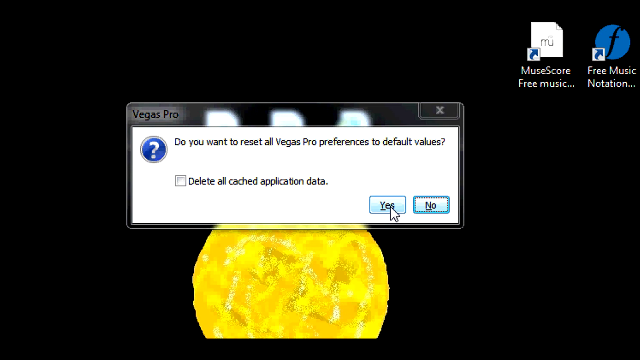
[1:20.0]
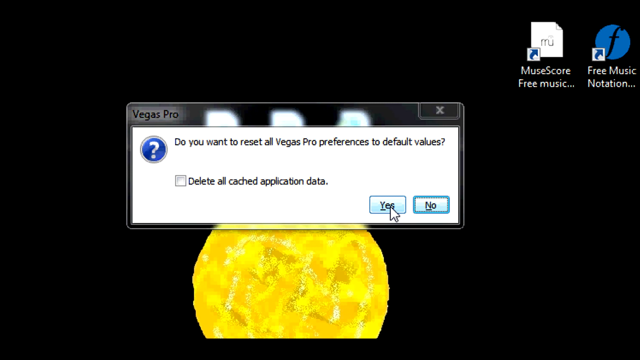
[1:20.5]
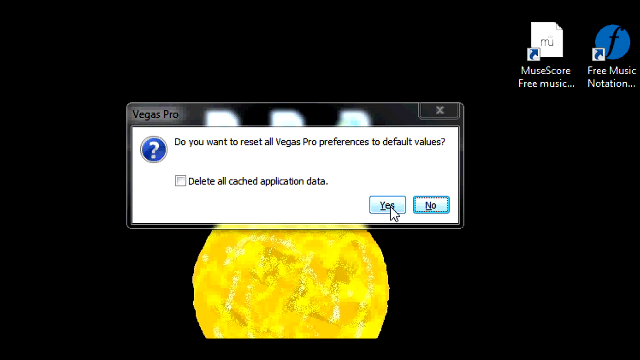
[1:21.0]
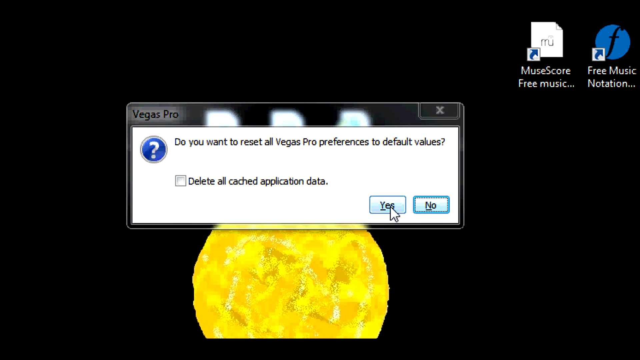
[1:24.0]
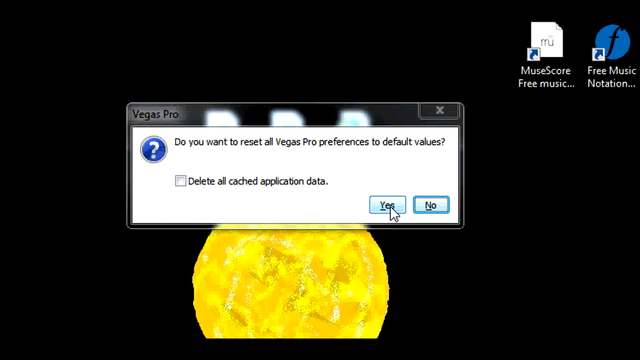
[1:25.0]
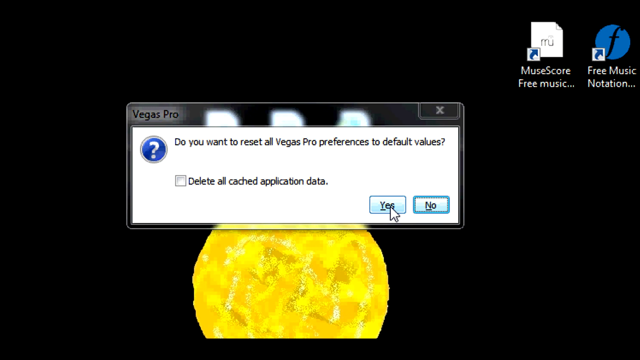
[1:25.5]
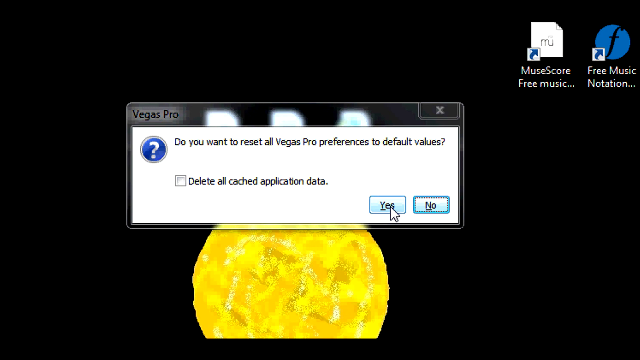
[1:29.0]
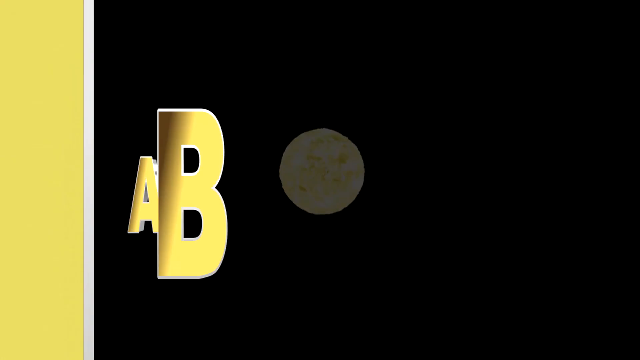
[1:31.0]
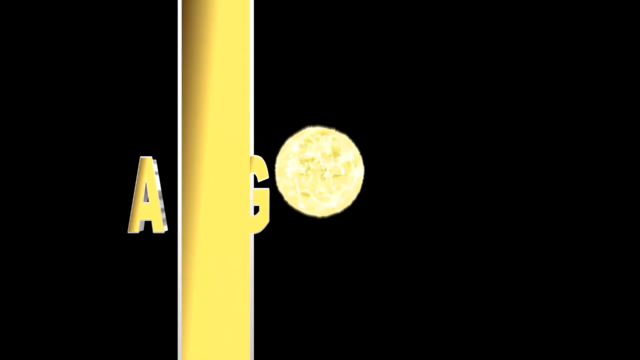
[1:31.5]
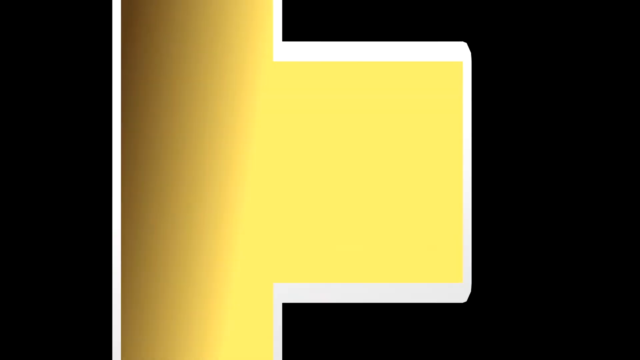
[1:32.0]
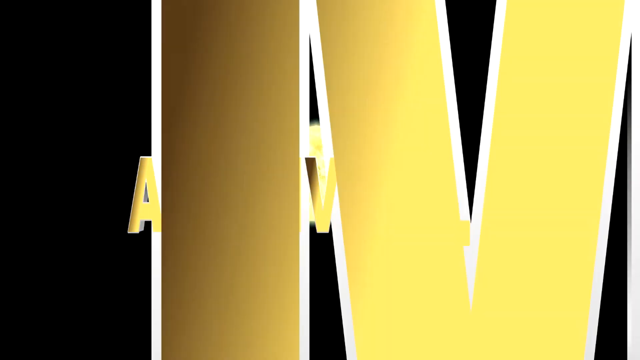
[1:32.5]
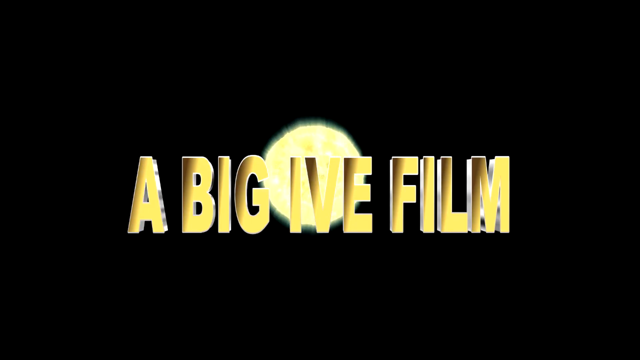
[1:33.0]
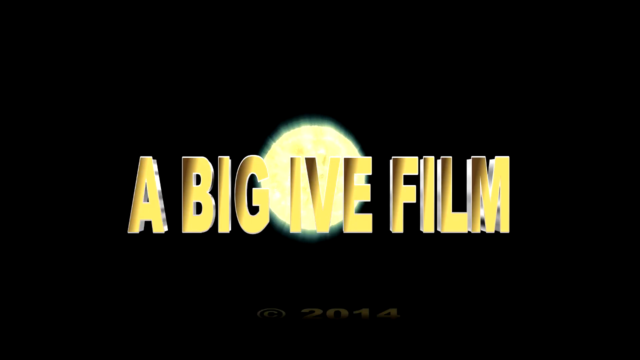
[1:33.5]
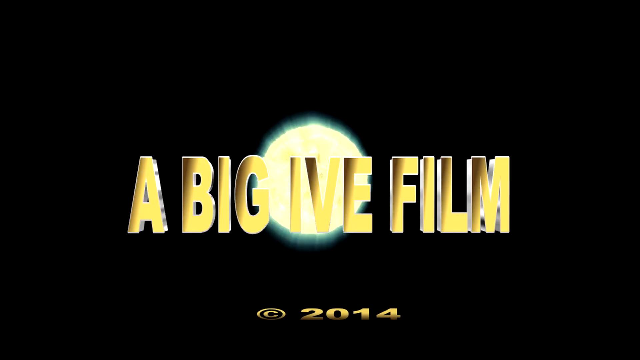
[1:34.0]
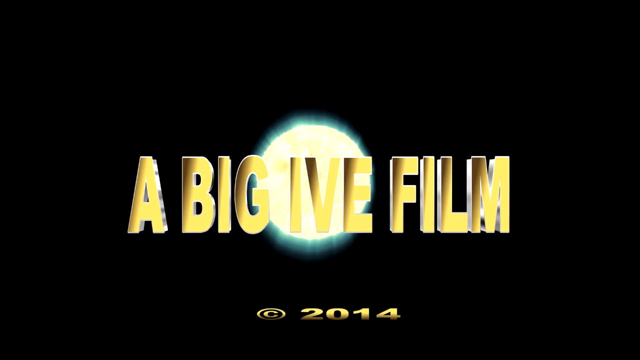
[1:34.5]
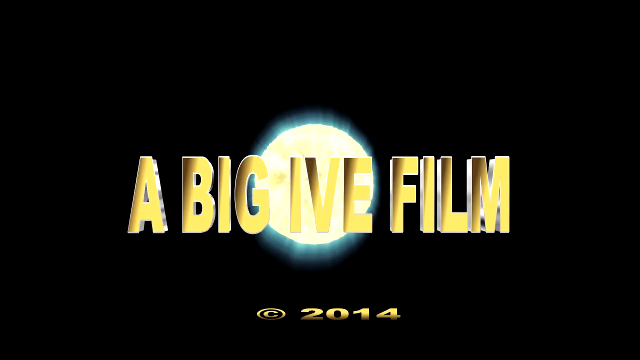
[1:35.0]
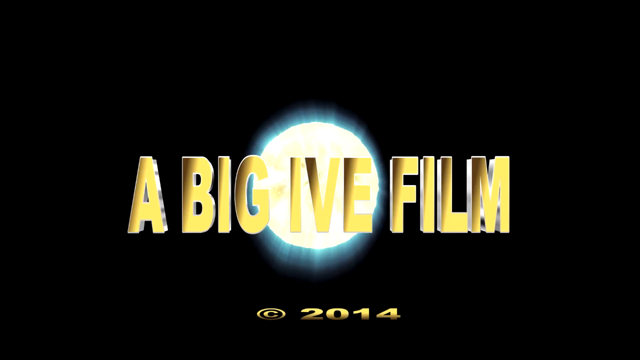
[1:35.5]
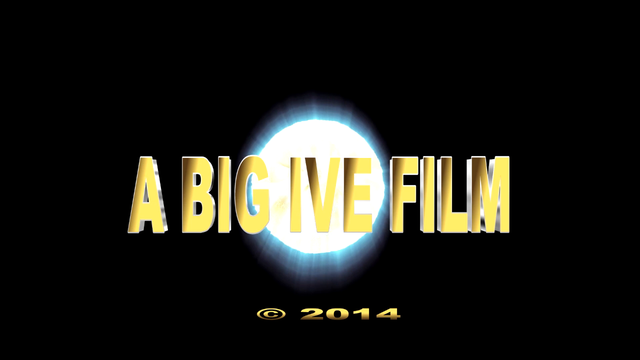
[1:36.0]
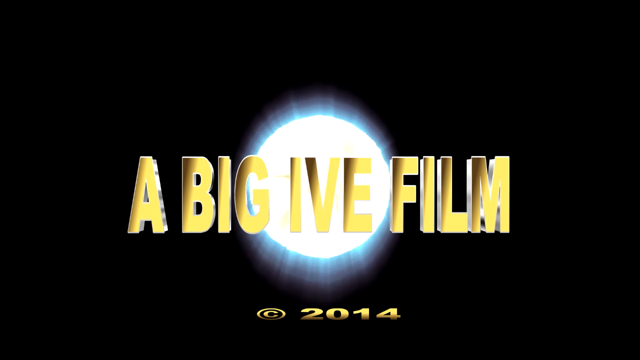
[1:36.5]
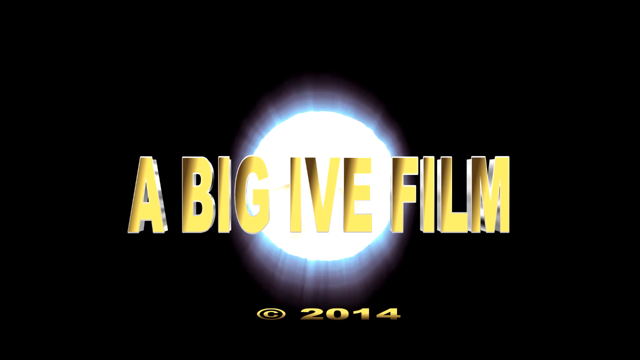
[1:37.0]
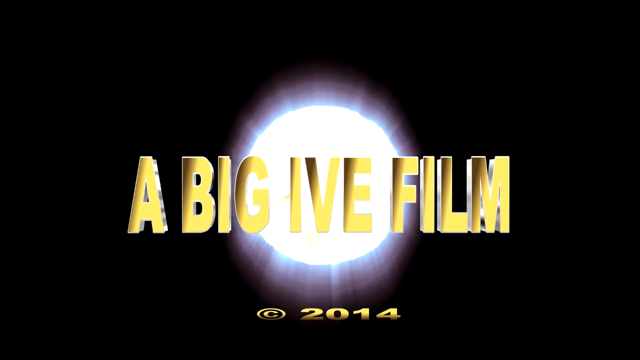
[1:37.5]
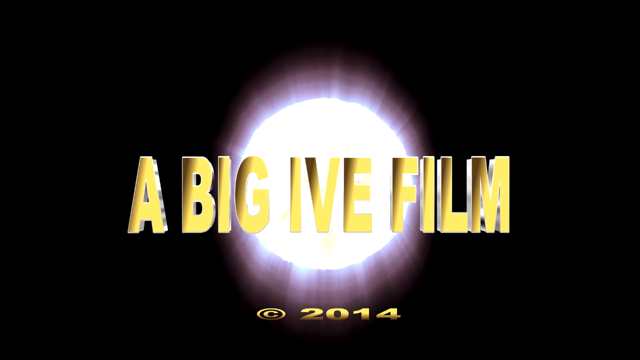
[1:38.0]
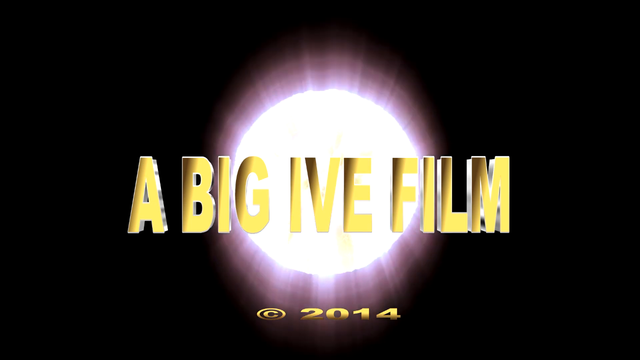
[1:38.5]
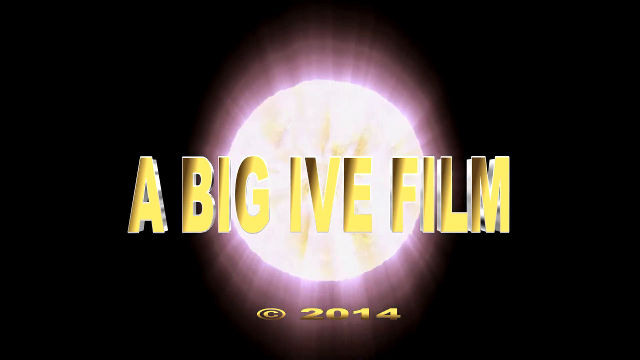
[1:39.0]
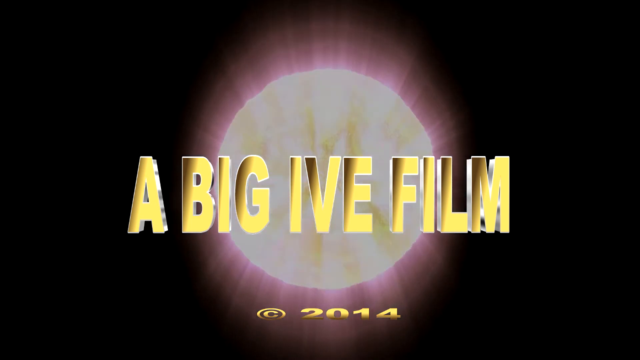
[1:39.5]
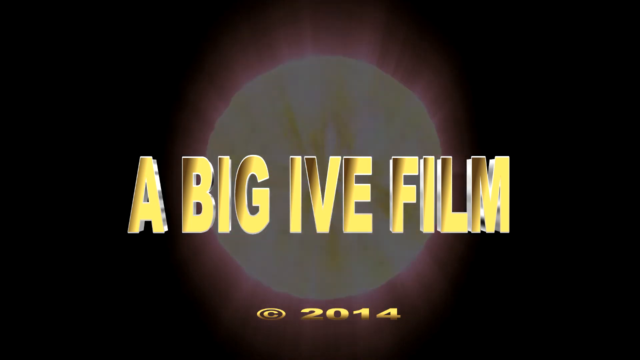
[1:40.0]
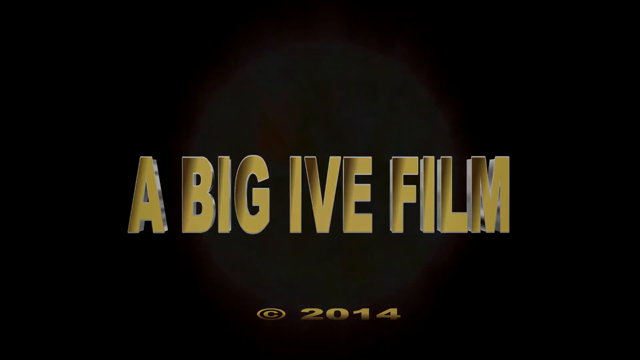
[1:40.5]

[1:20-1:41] The white cursor is over the "Yes" button on the bottom right of the pop-up. The bar of the pop-up window is transparent, so the top halves of the icons directly behind it are visible. They apparently do not click yes. A new screen transitions in, showing large gold capital letters in the center of the frame. Behind the letters is a spinning sun or moon, most likely a sun, since it becomes brighter and whiter as it gets closer. At the bottom is the copyright symbol with the year 2014 next to it. The sun then disappears, leaving only a black background and the text. The letters seem to have a shadow or thickness that makes them look sort of 3D.